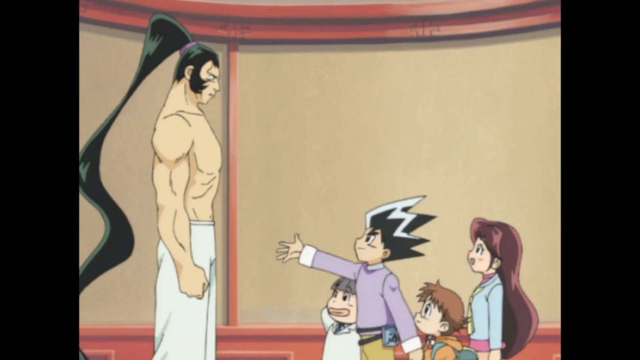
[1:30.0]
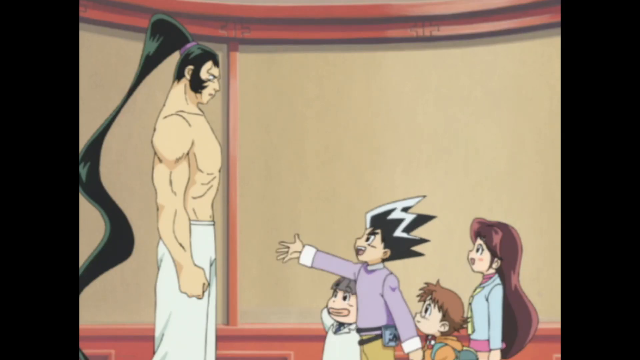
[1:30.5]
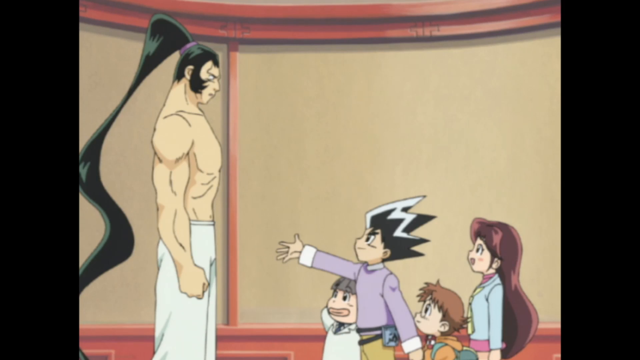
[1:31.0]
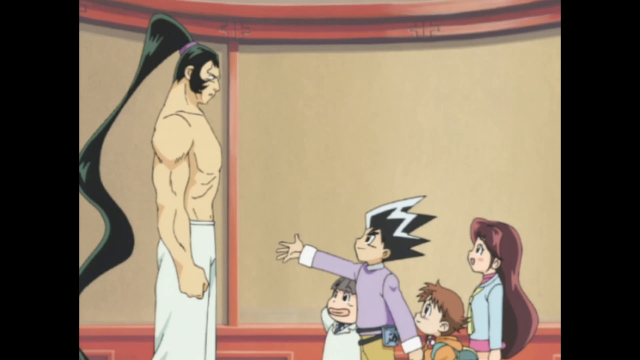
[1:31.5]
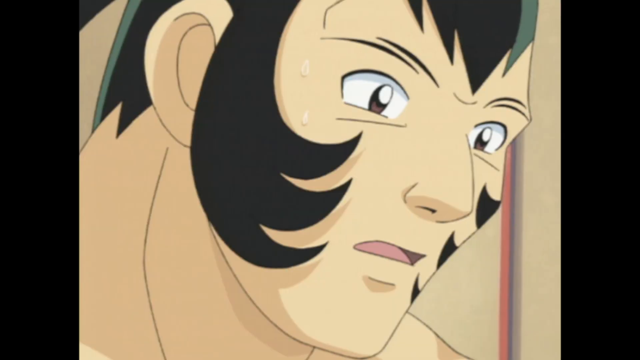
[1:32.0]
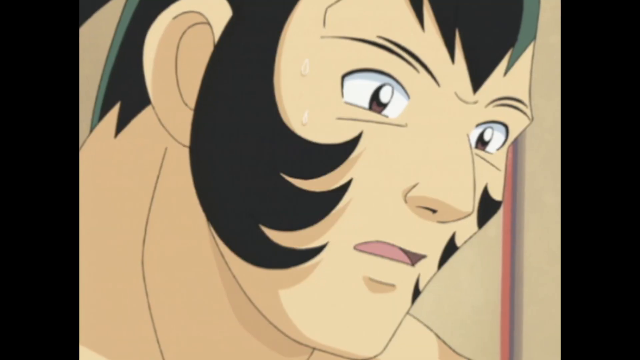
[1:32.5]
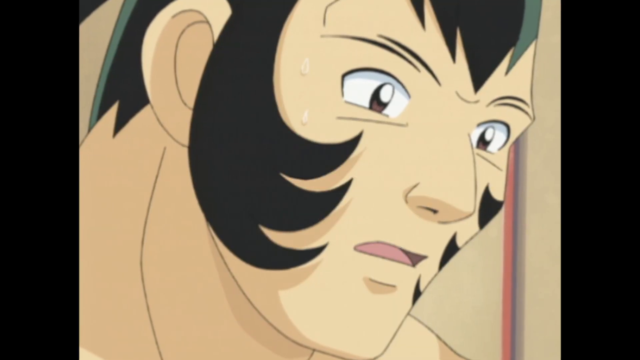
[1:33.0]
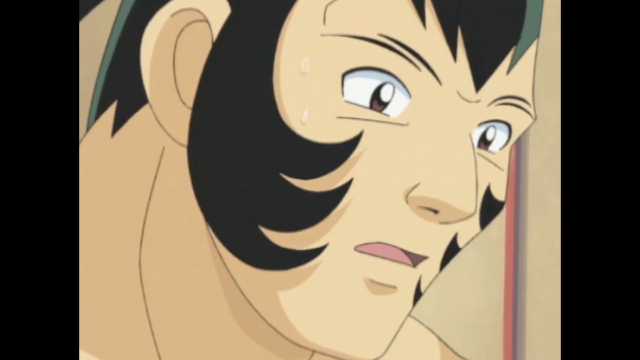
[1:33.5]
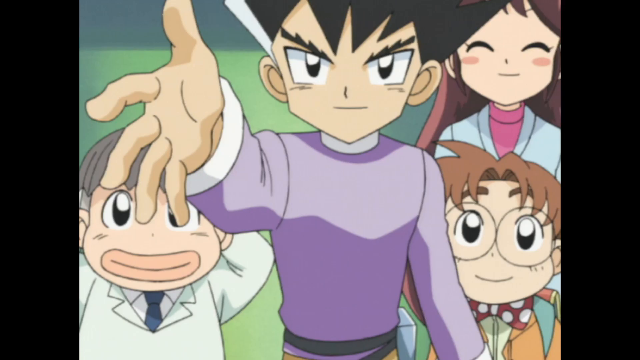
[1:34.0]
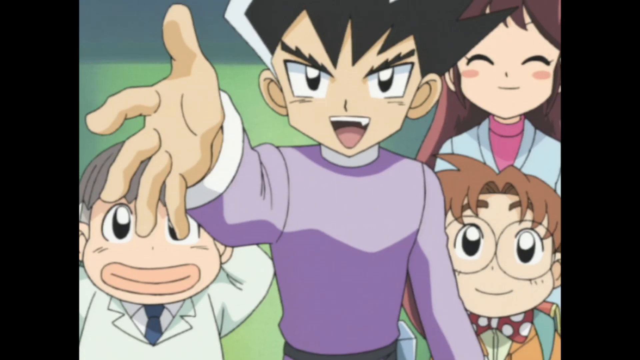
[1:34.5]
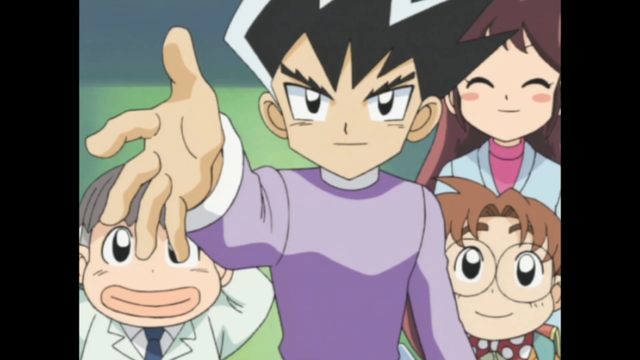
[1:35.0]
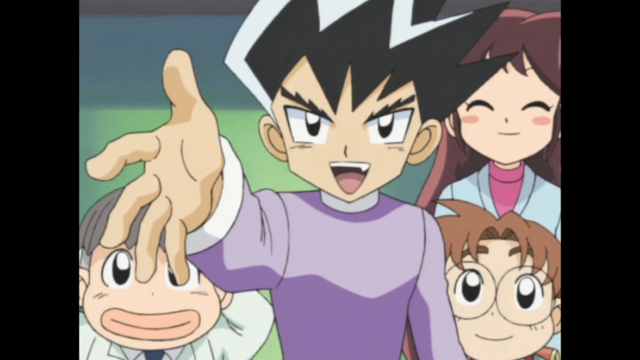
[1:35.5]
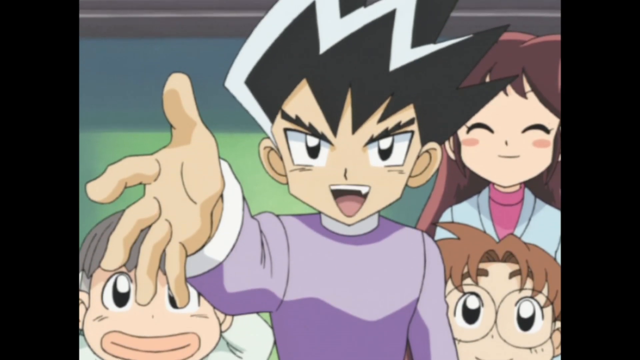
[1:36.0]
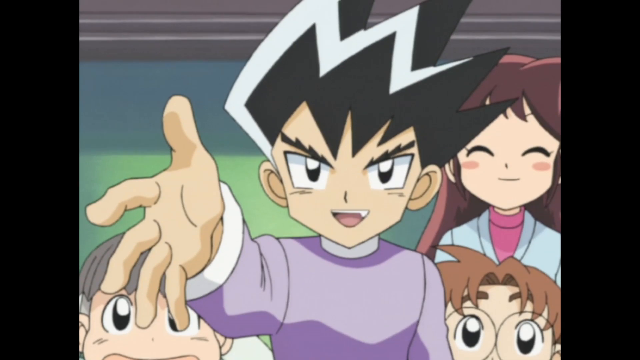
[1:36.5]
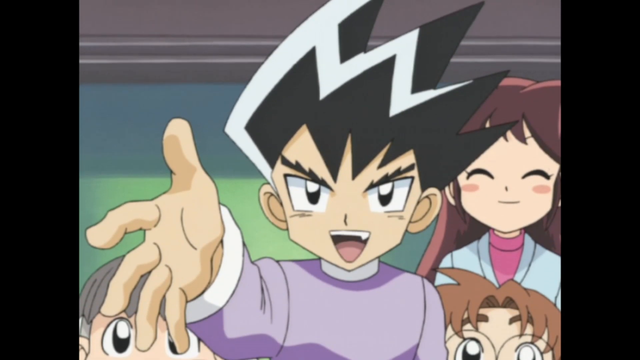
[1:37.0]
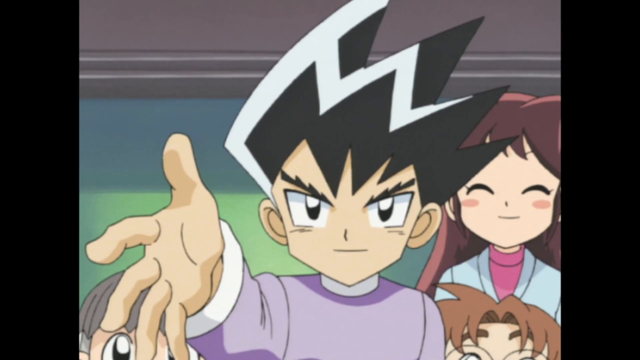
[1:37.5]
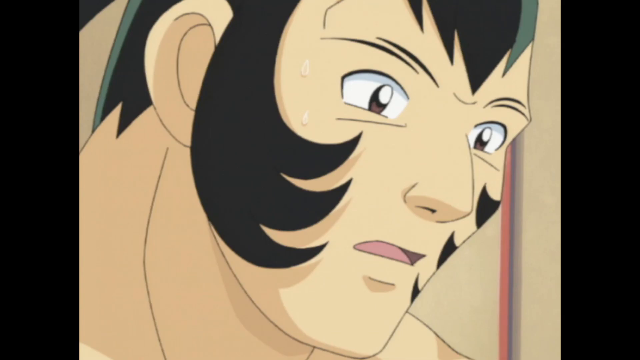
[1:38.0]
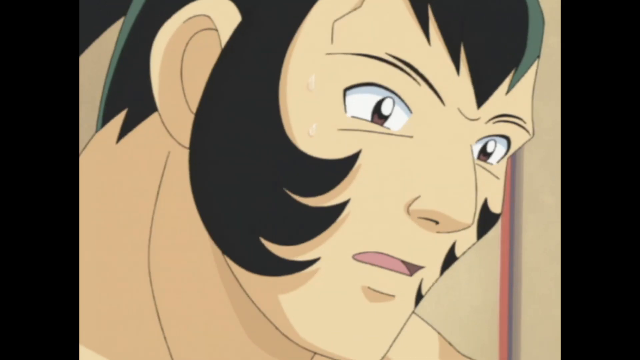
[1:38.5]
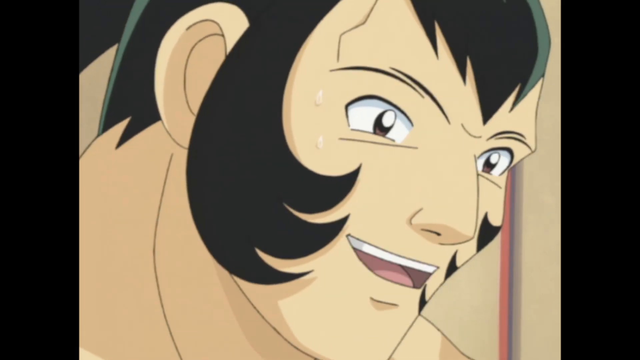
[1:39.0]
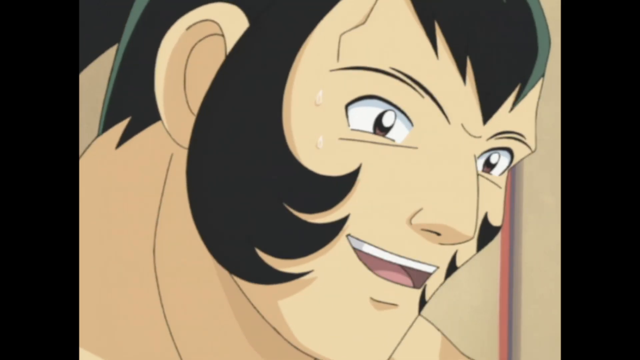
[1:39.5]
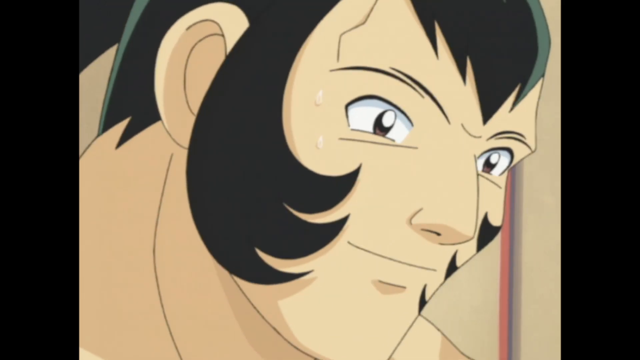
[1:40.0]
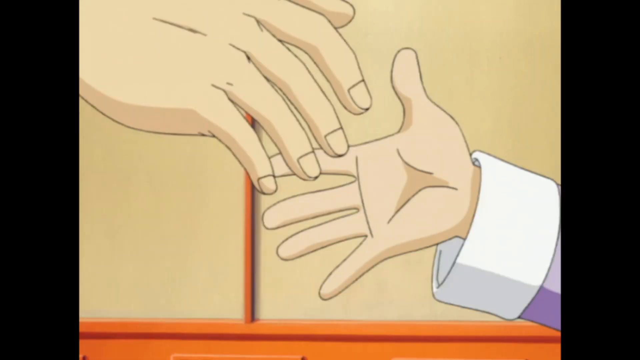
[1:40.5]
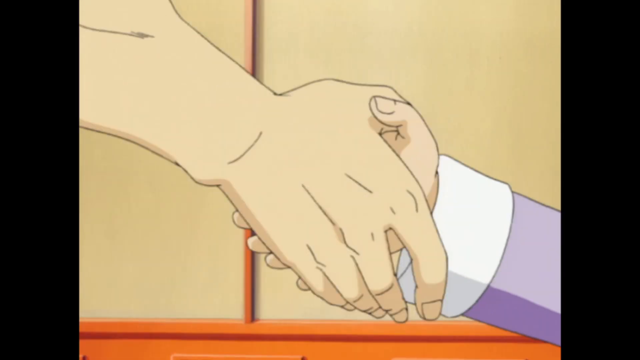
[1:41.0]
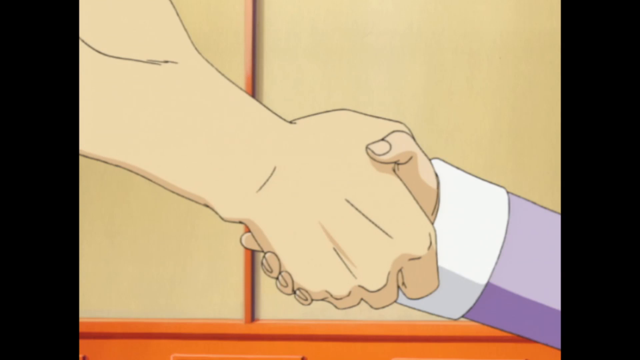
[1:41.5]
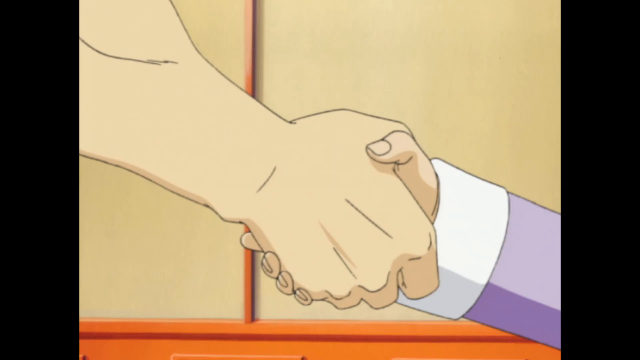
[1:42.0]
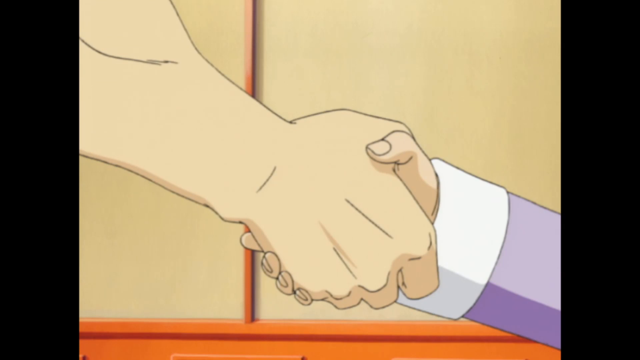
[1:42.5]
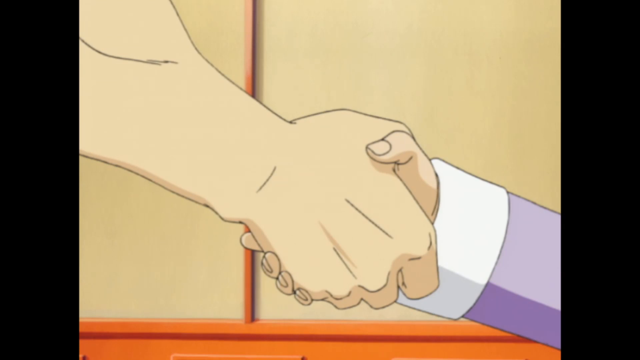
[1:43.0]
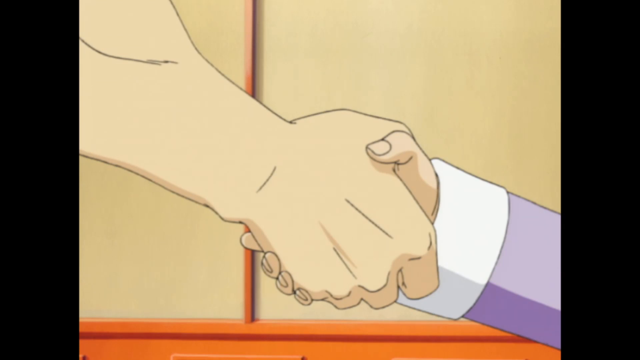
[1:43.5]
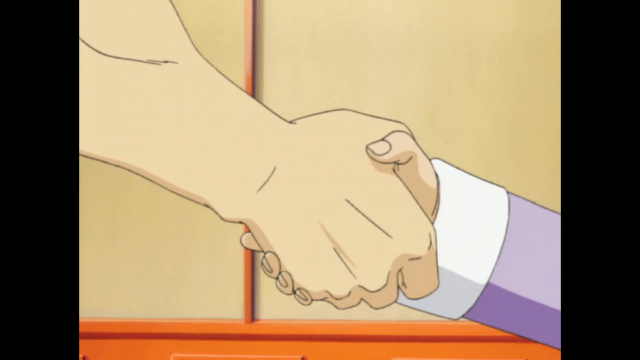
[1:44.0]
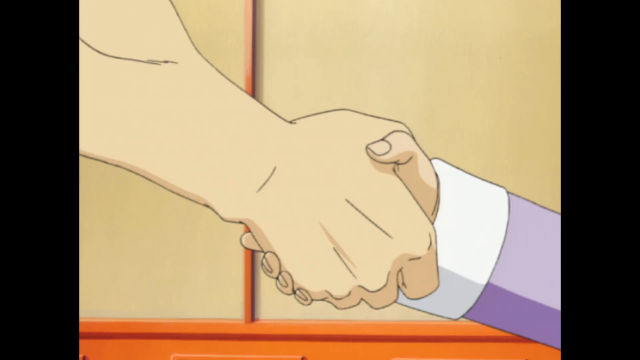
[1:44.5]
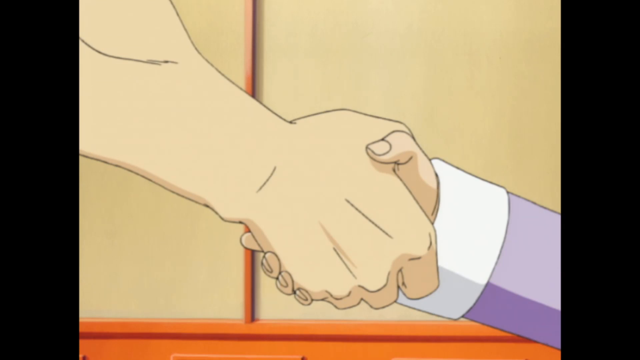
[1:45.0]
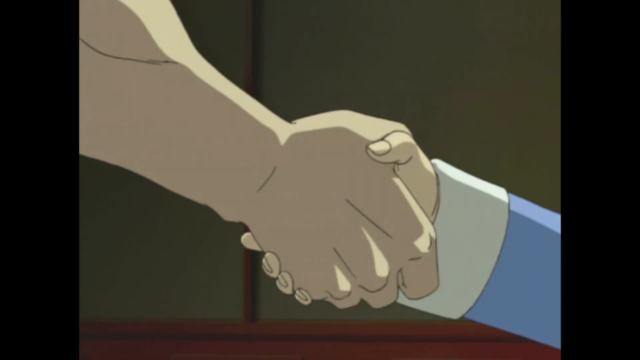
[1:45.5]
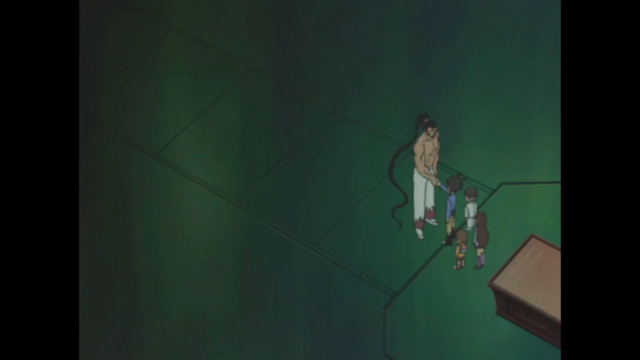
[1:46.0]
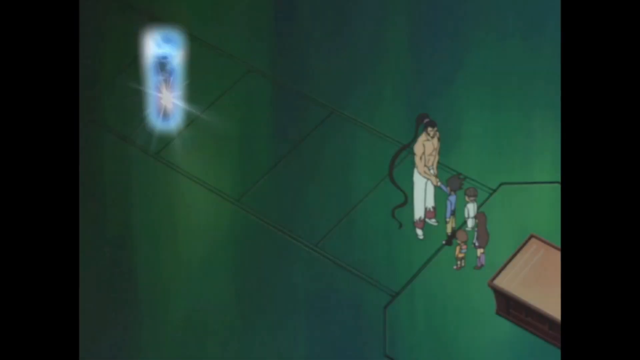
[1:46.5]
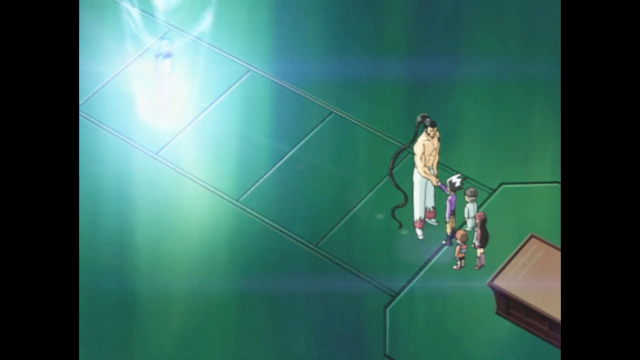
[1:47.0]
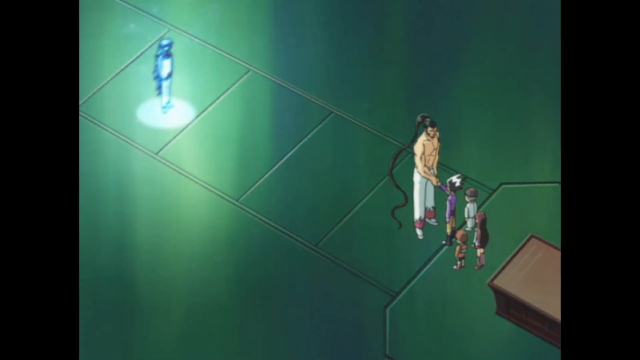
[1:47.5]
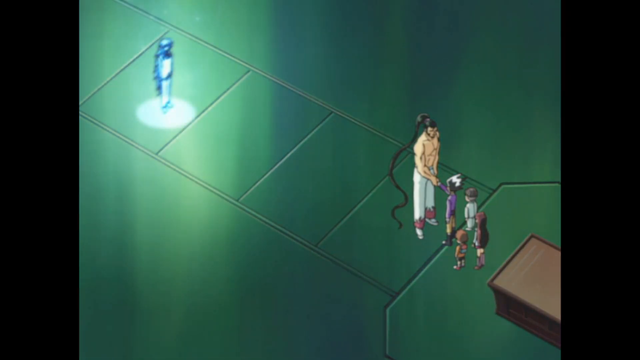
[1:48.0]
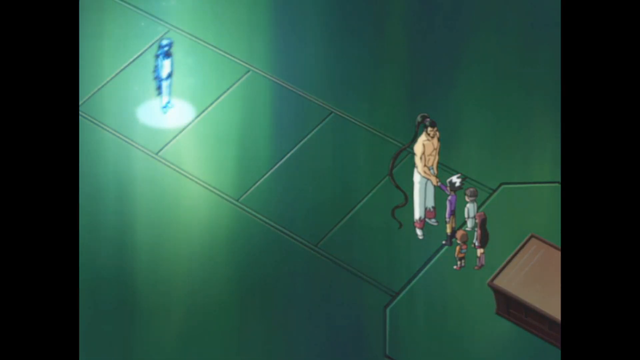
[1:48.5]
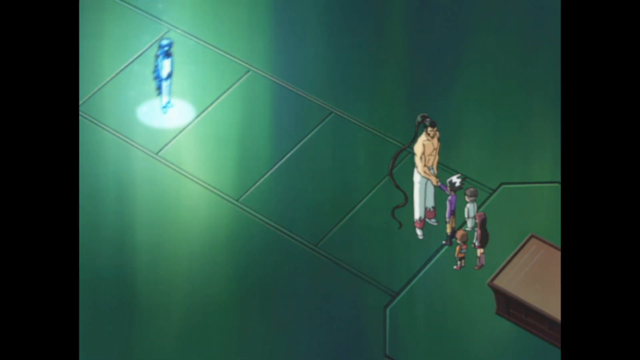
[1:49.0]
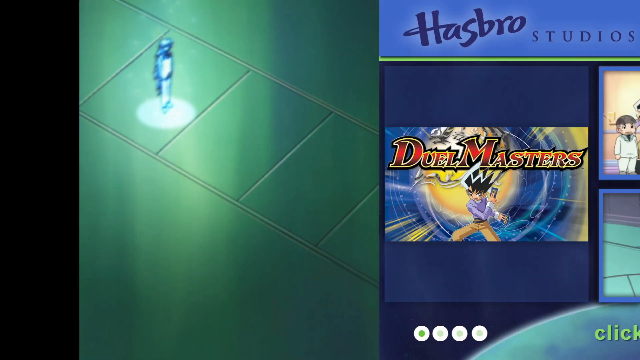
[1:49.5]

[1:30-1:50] The young man tries to greet the shirtless guy, whose beard is visible. The shirtless guy stops frowning and looks amazed. The guy in the sweater stretches out his hand, backed by the three kids. The girl's eyes are closed, one of the boys crosses his hands, and the other boy, who wears glasses, looks at the shirtless guy with his eyes wide open. The two converse, and they shake hands as a sign of agreement. The room is dark, and the scene is seen from an aerial view. The ponytail is long and touches the floor. It is green. The table is there, but no cards are visible. The three children, two boys and a girl, are still there. Lights appear a few meters from them, and a person appears there. Then a cover appears reading "subscribe", "Assobro Studios", "subscribe" and "Dreams, Dream Master". Four frames are shown, each with a character; some frames have more than one character.